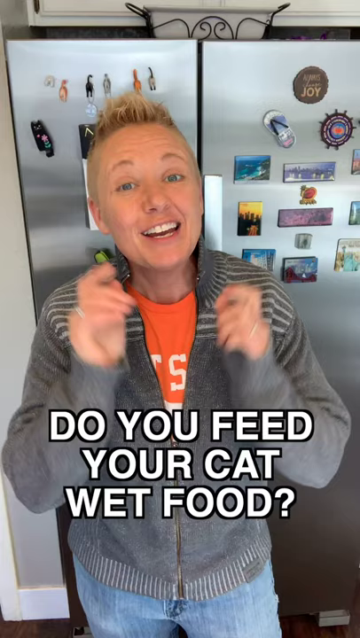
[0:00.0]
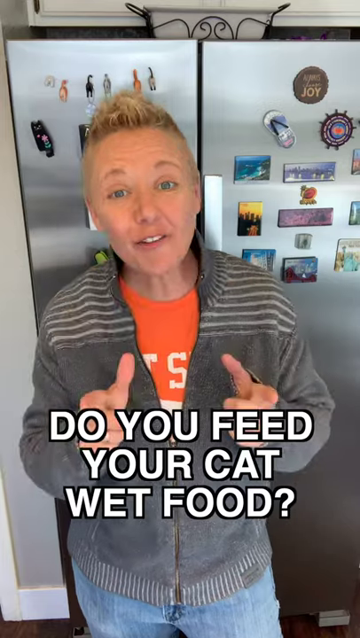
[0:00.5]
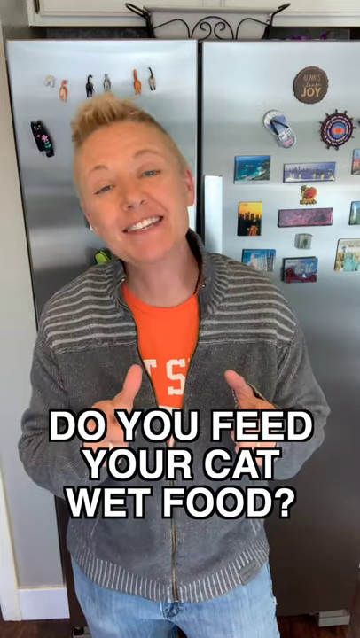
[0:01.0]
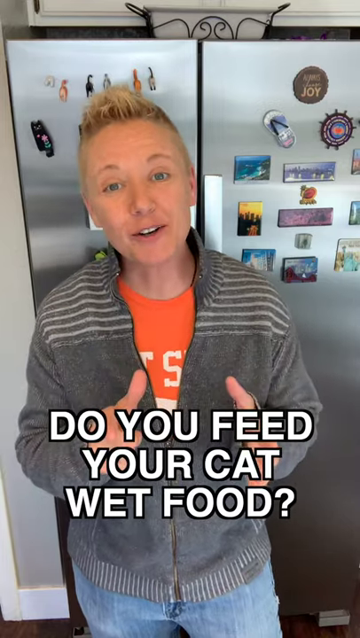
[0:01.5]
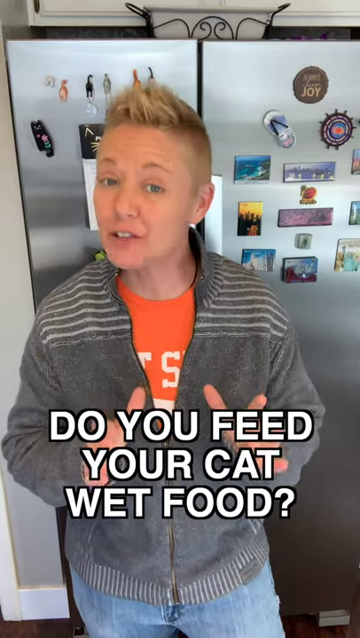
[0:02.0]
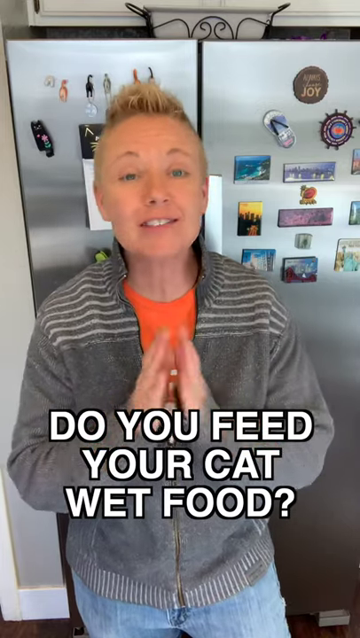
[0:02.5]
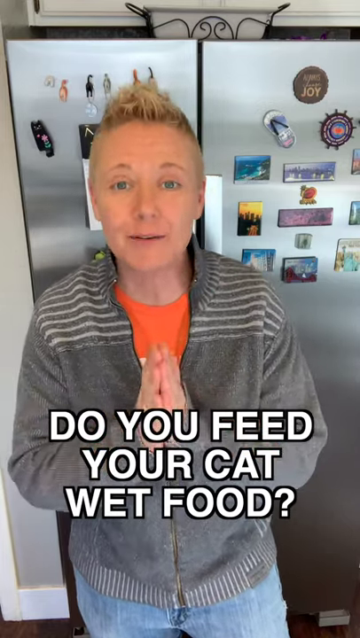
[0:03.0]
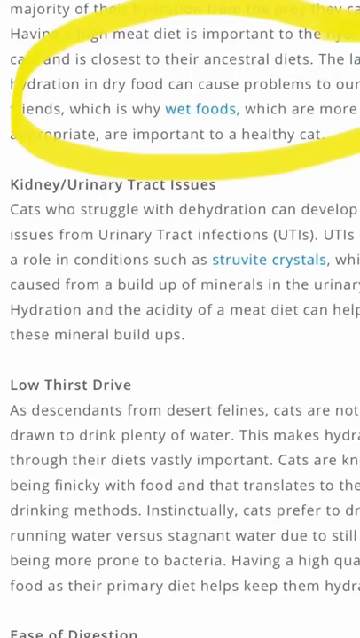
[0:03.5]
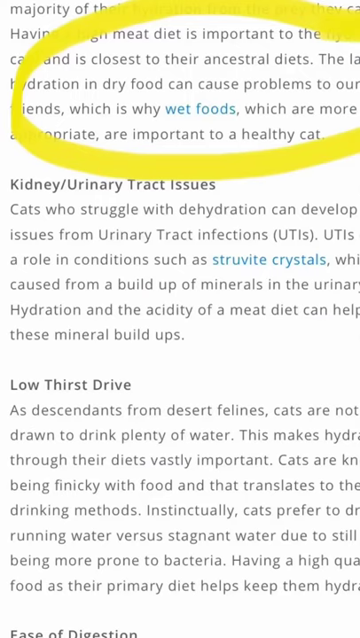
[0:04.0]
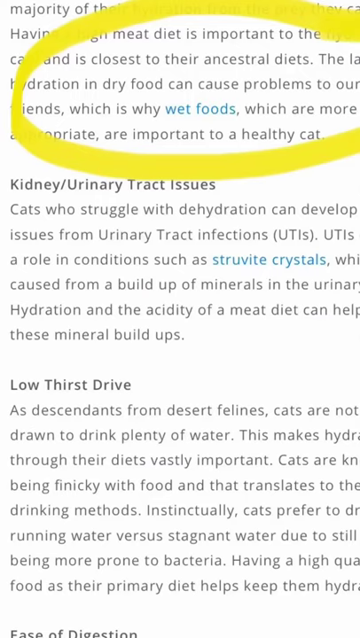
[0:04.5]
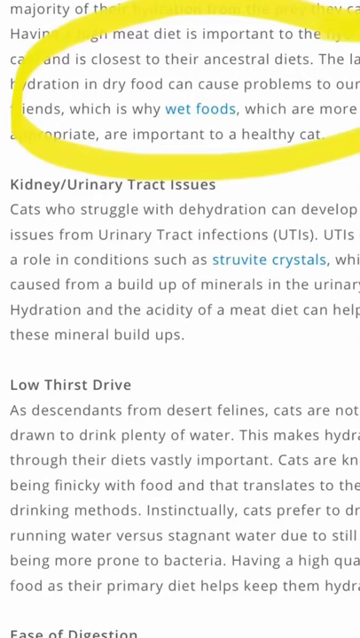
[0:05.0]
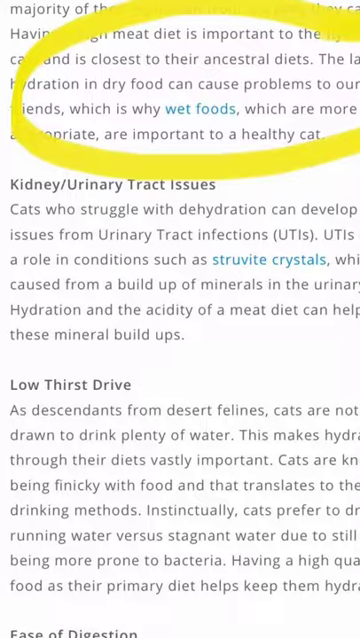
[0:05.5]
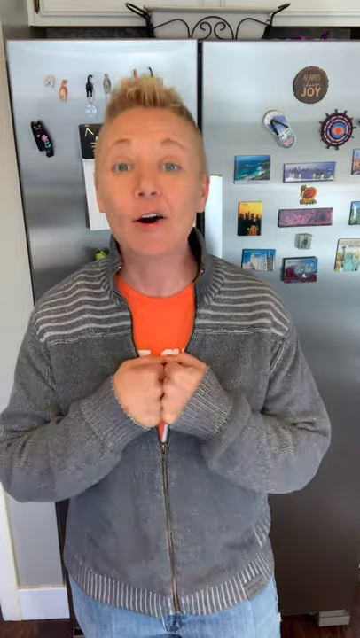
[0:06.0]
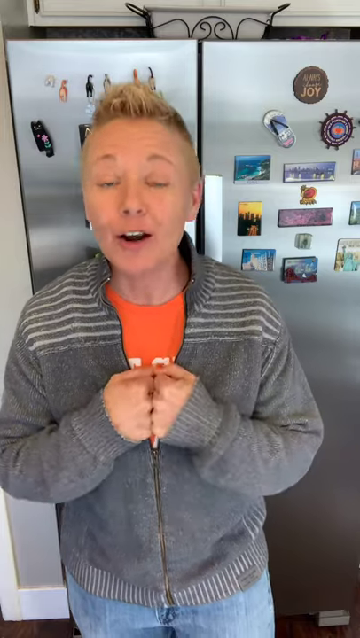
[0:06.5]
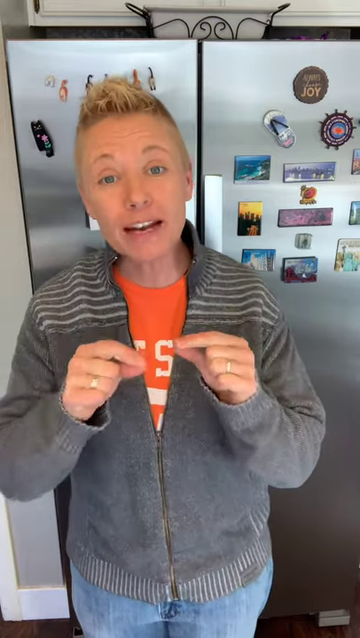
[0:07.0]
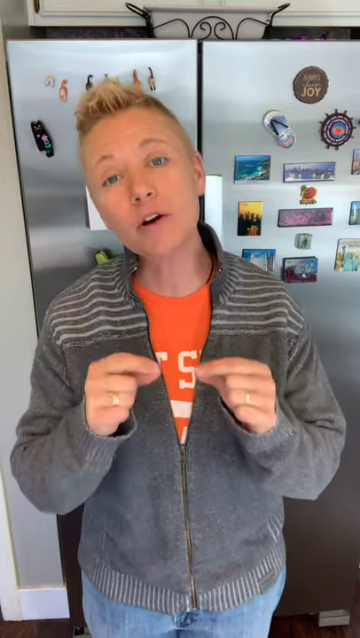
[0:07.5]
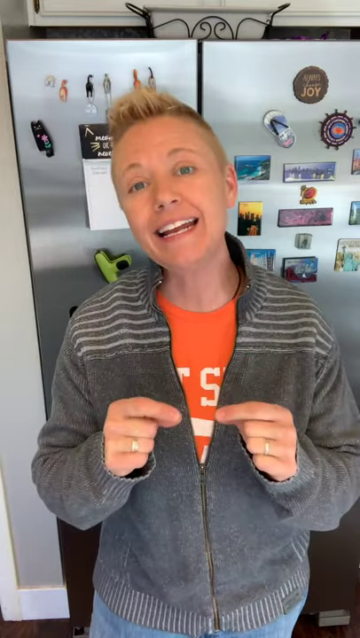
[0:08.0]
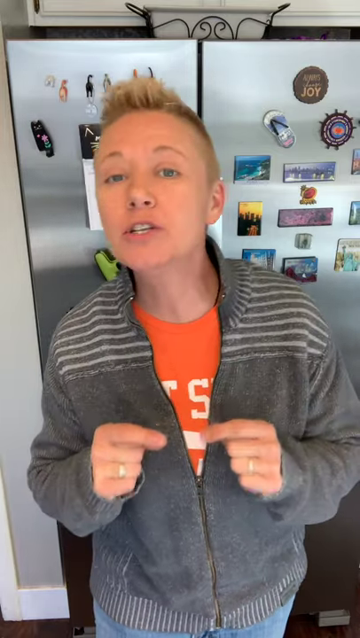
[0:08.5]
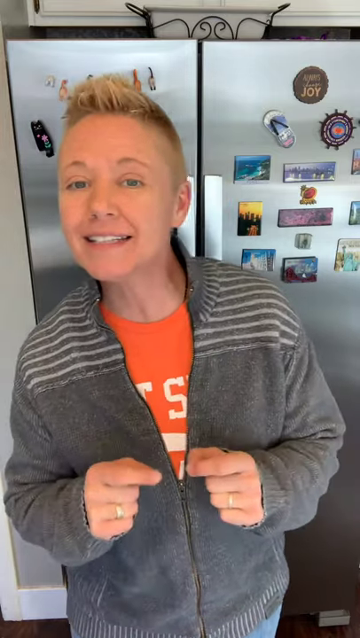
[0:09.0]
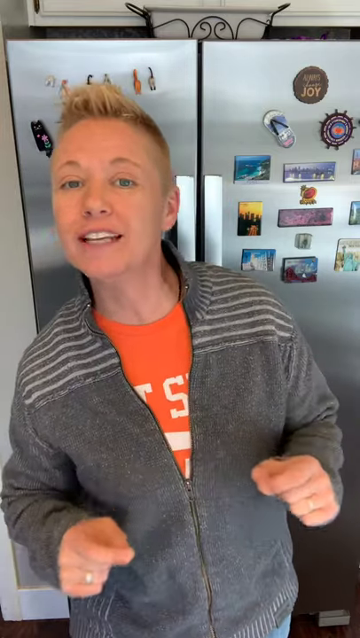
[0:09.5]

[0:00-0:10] A woman with a somewhat spiky haircut, kind of like Justin Bieber's, wears what looks like an orange shirt under a grayish zippered sweatshirt at the start of the video. She seems to be somewhat older. Behind her is a fridge with some magnetic tags, a calendar, and a pen that says "joy". Text at the very bottom middle reads "do you feed your cat wet food?" Part of an excerpt is then highlighted, reading "dry food can cause problems to our friends, which is why wet foods are more appropriate and are more important to a healthy cat."